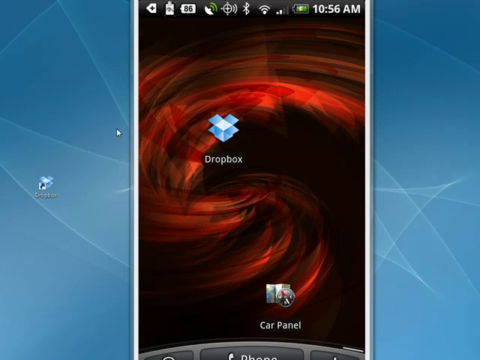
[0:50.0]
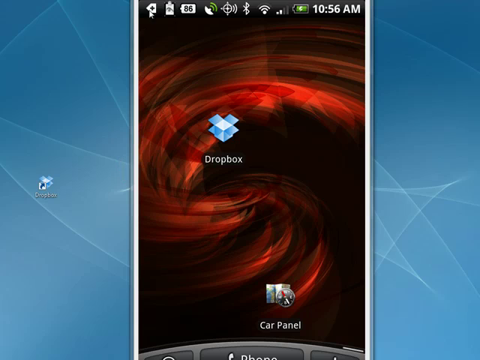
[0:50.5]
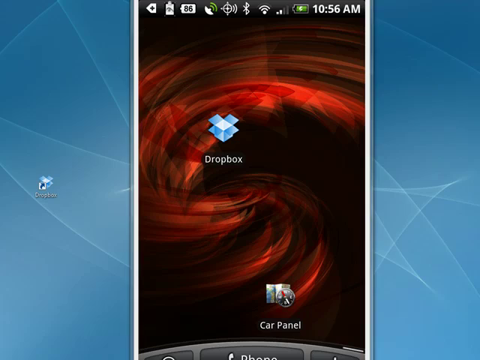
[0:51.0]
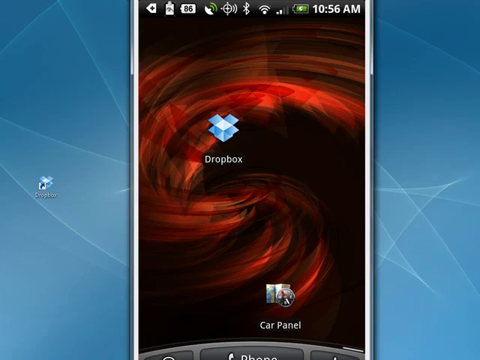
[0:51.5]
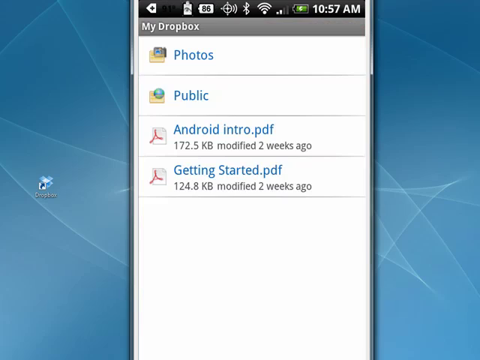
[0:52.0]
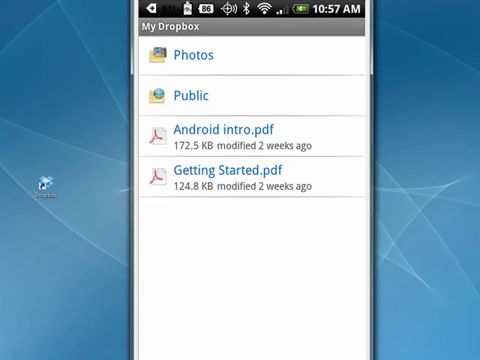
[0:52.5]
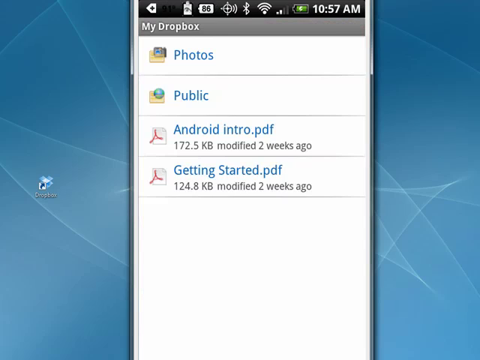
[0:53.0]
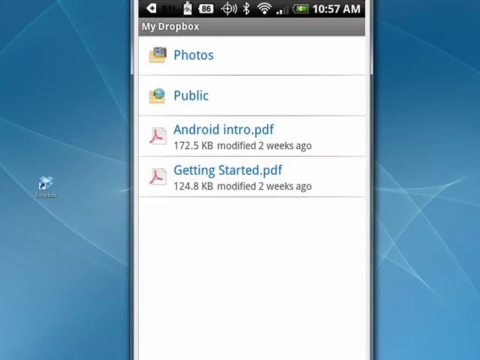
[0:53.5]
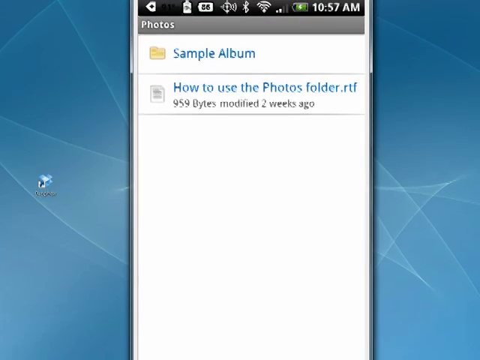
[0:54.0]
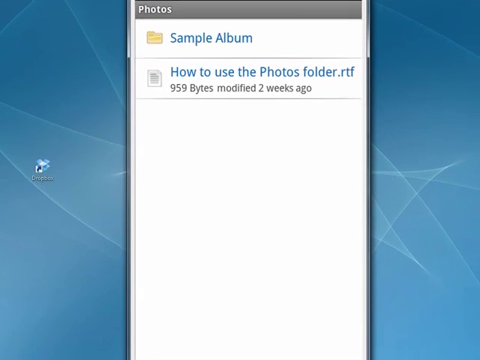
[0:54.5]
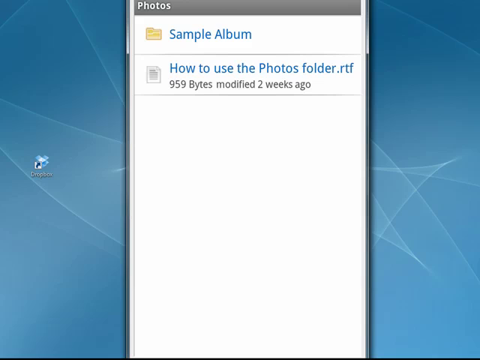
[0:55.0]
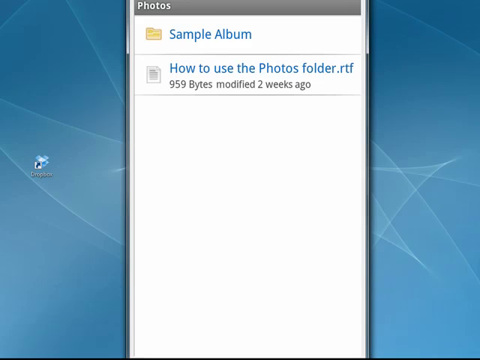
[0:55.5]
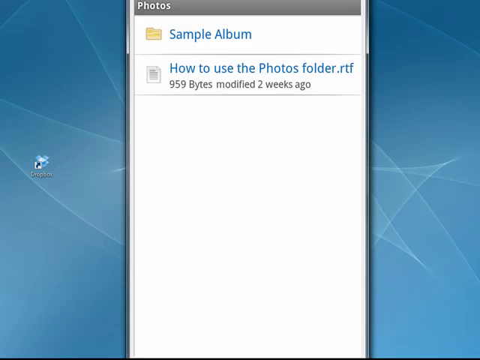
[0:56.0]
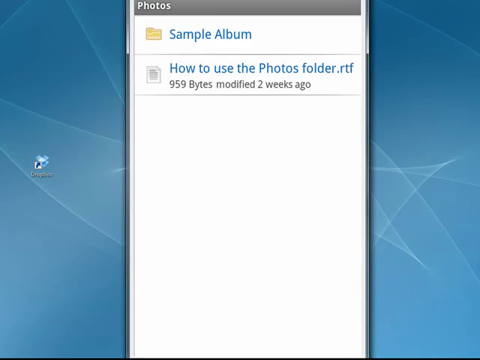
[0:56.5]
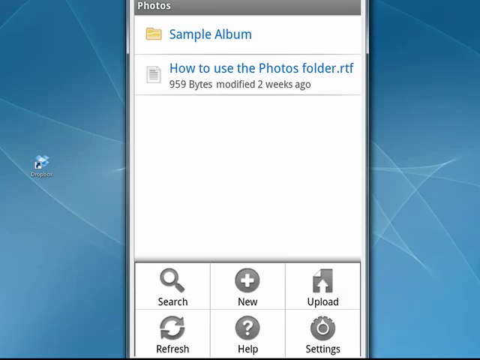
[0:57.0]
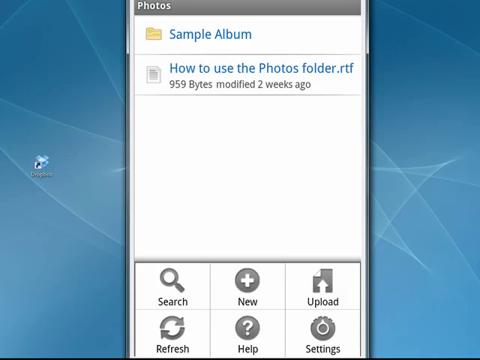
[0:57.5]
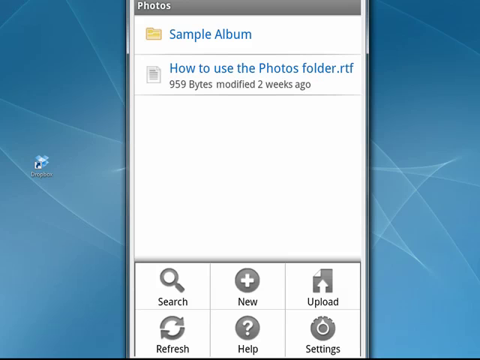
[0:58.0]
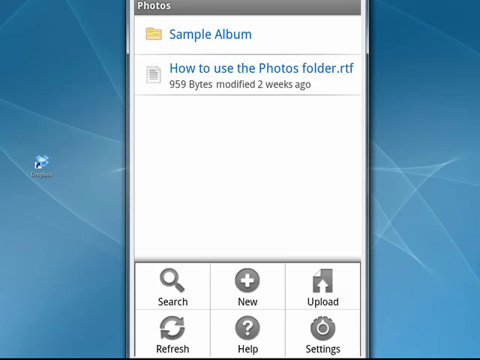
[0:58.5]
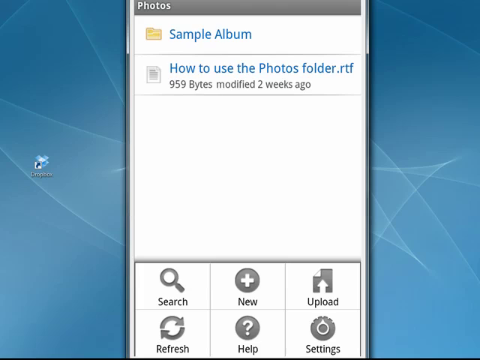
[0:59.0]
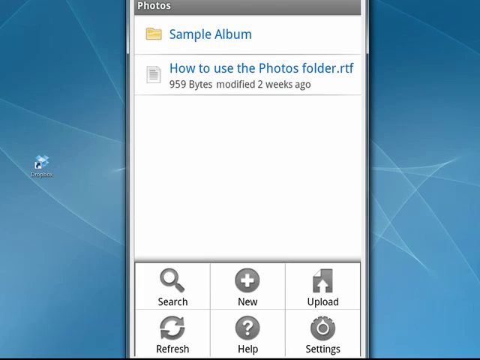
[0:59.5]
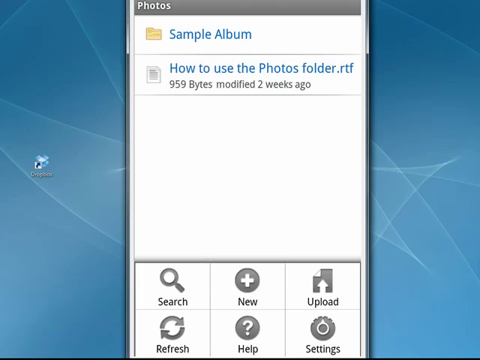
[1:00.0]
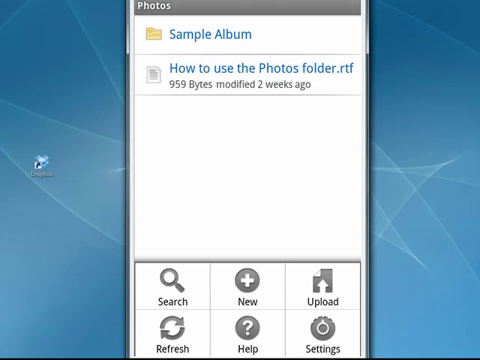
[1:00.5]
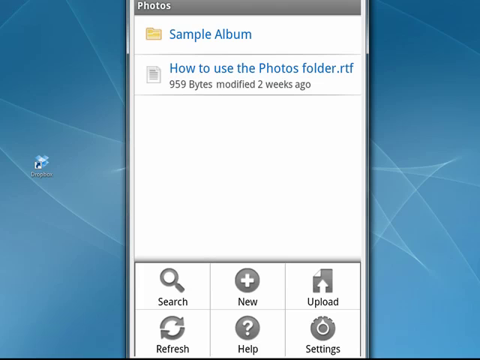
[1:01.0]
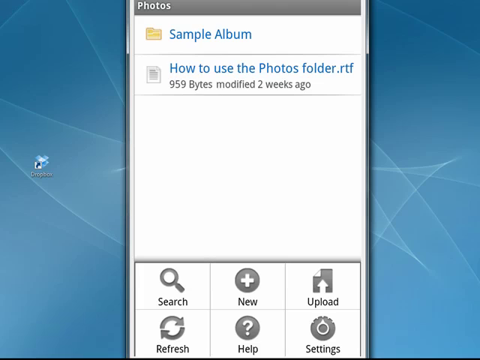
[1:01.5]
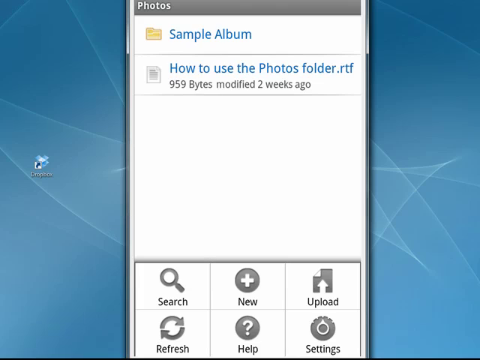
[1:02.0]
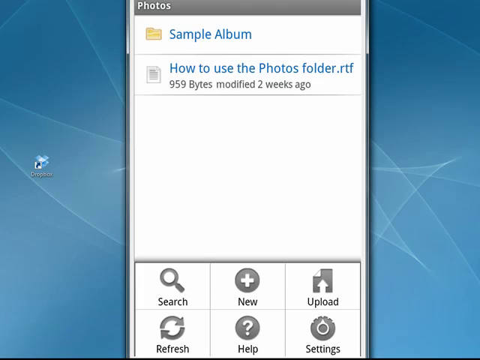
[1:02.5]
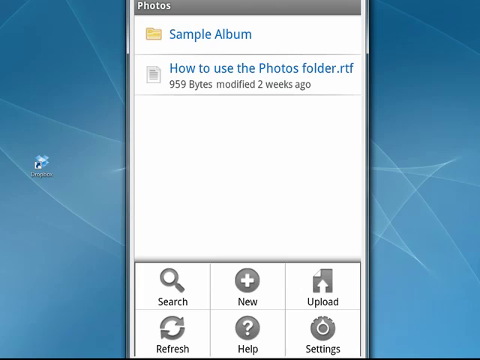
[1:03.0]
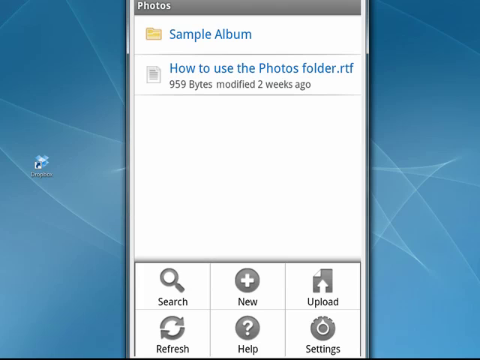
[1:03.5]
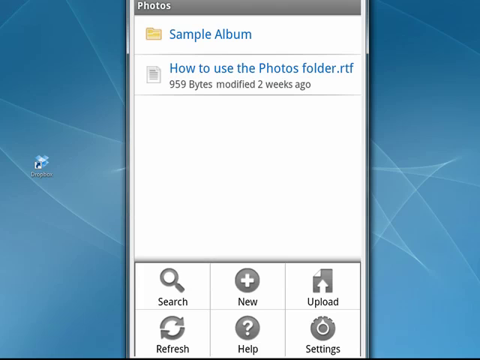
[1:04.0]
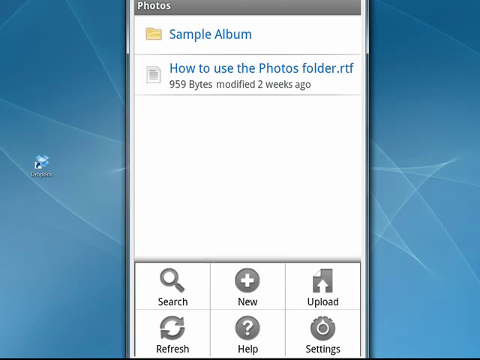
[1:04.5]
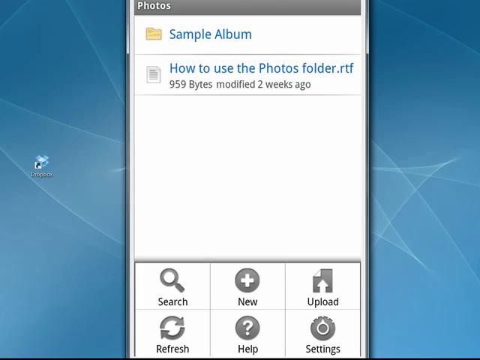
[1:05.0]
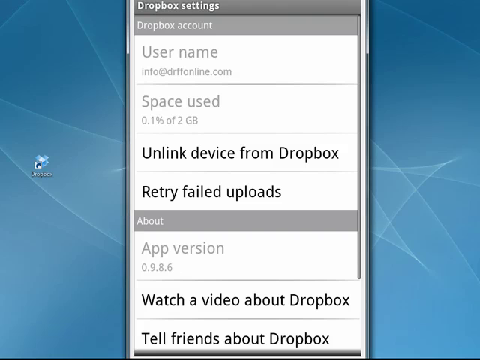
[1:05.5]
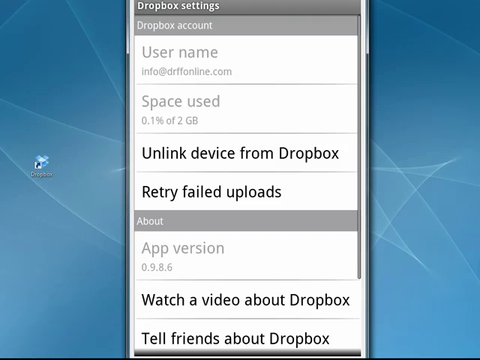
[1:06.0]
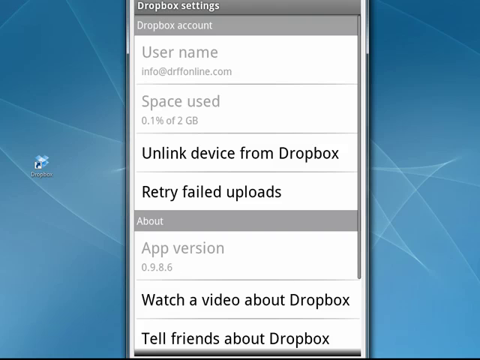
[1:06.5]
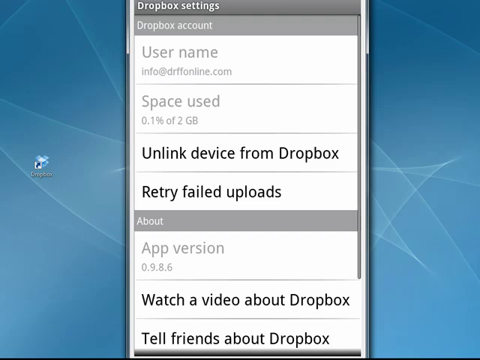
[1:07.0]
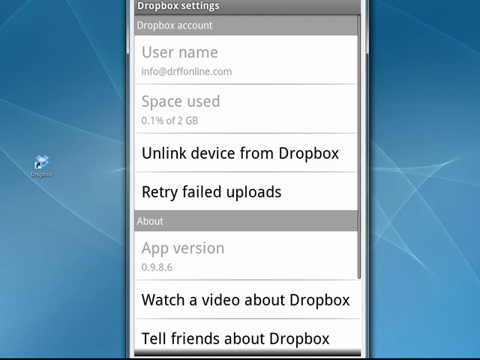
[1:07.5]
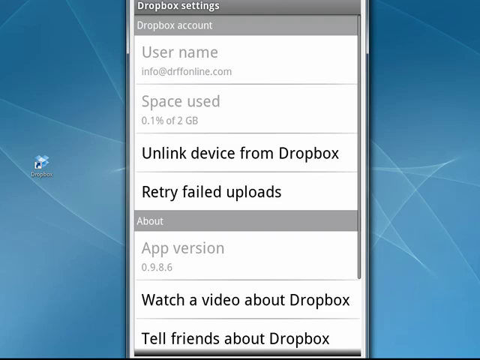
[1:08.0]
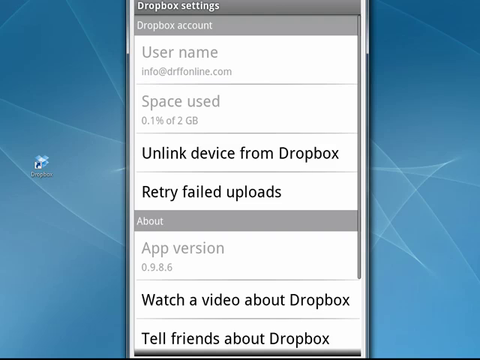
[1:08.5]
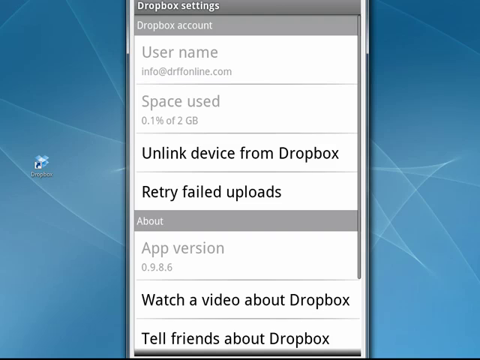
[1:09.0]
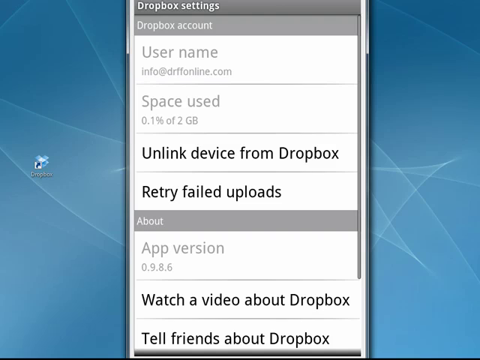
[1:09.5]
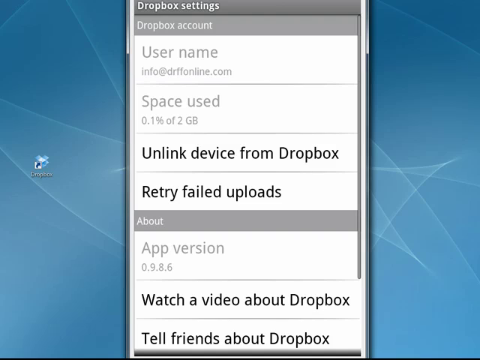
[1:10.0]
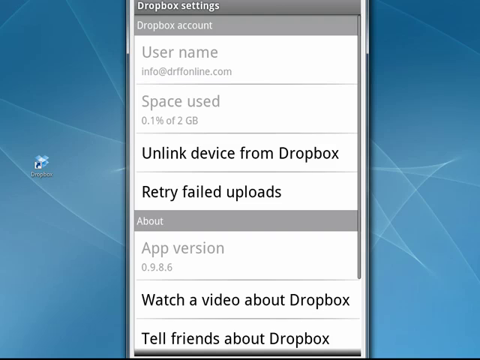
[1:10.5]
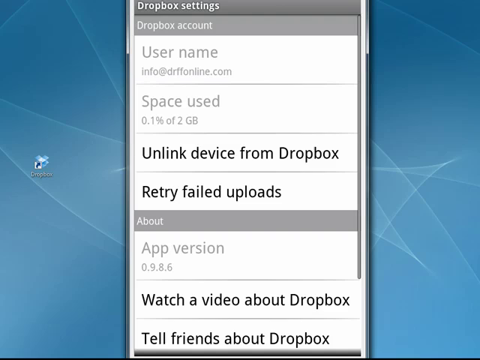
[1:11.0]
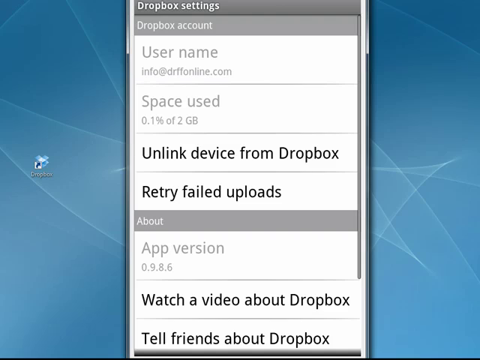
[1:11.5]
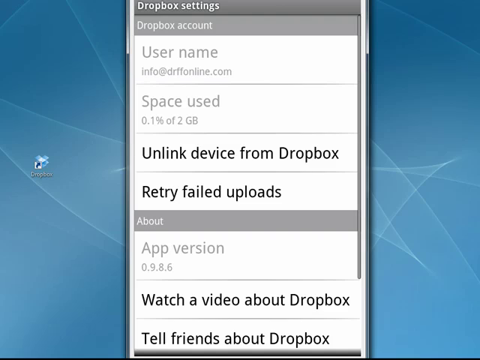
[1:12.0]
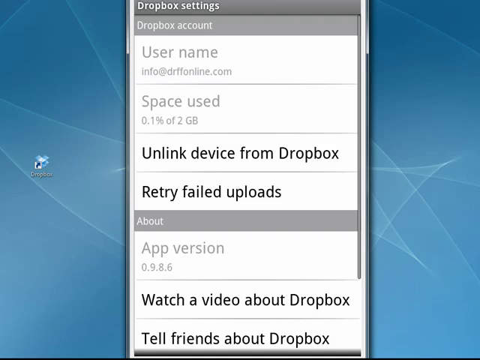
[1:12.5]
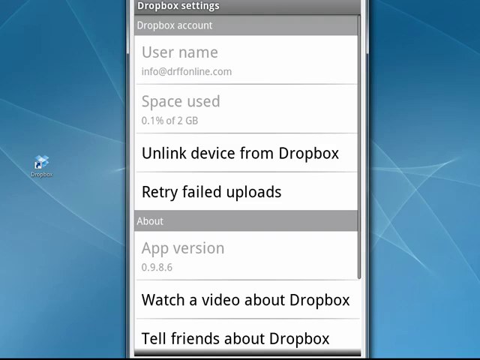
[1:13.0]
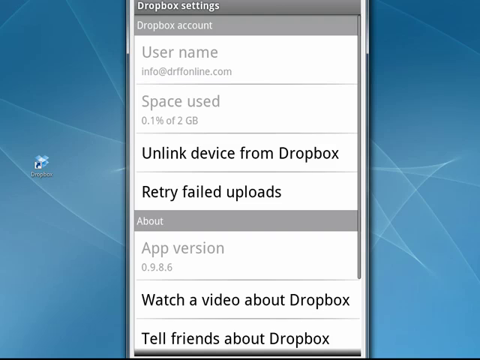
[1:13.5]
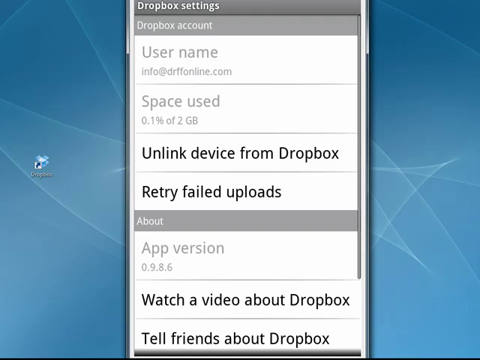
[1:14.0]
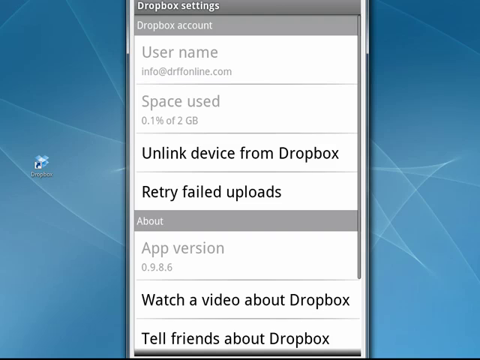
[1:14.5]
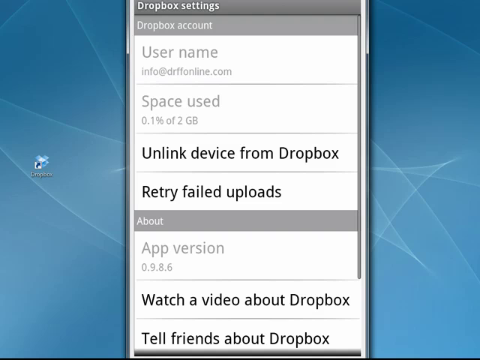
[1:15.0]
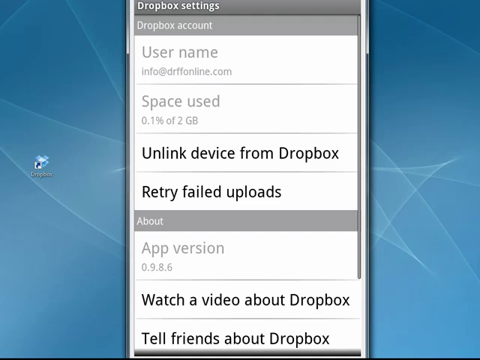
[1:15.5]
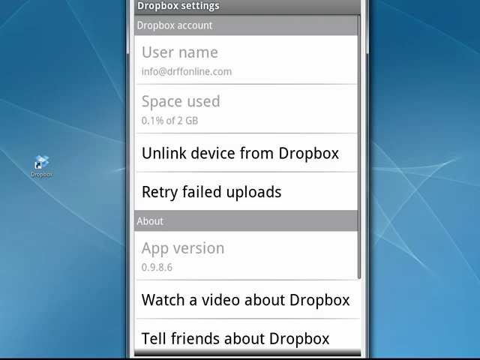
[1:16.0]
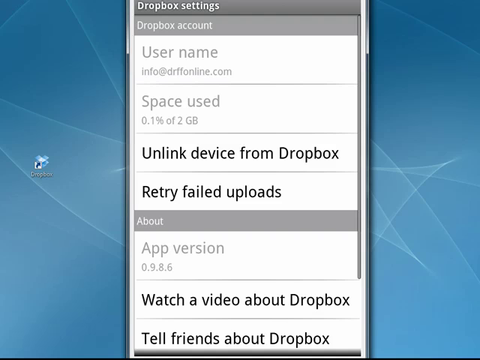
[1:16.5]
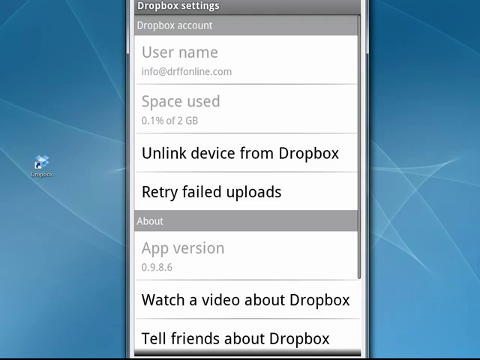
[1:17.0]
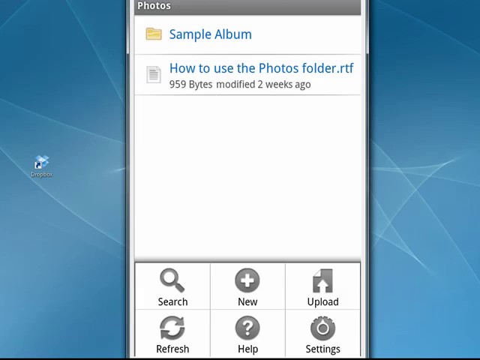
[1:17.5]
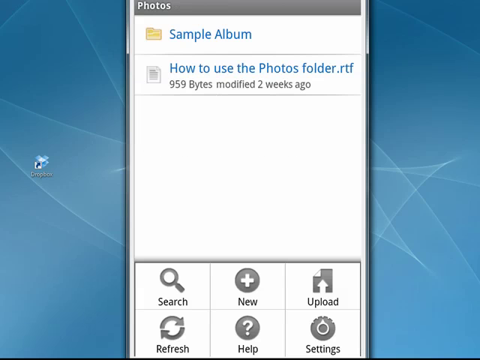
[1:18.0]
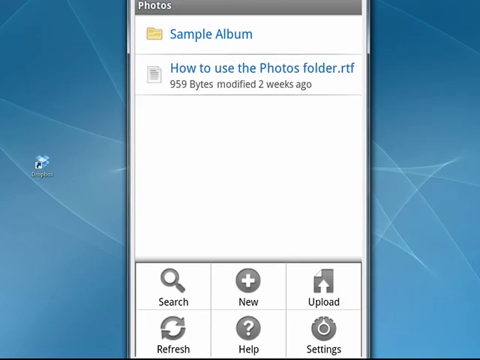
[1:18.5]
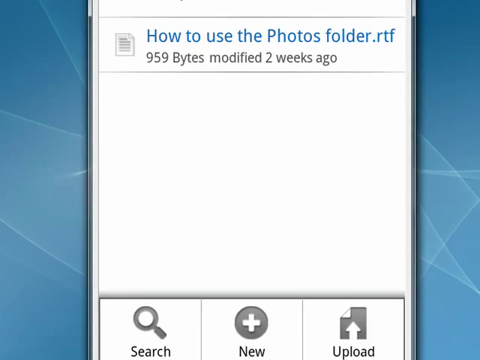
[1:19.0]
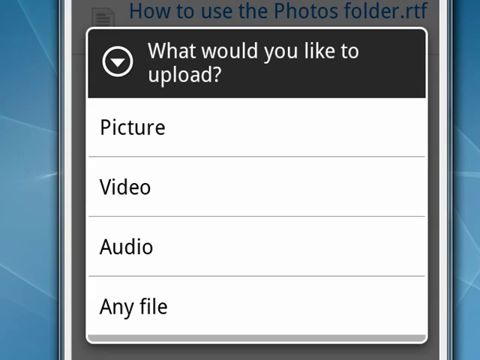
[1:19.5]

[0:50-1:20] On the phone screen the Dropbox icon is sort of 3D: a square whose four tops look open, as if something could be put inside, with "Dropbox" in white at the bottom. On the computer screen the icon looks similar, but there seems to be another square with an arrow in it on top. The phone screen then changes to a menu that says "My Dropbox" with the options "Photos", "Public", "Android Intro.pdf" and "Getting Started.pdf"; under Photos it says "Sample Album" and "How to Use the Folders for Photos.rtf". A pop-up appears with gray options that have pictures: "Search", "New", "Upload", "Refresh", "Help" and "Settings". Then the Dropbox settings open, showing the person's username and the space they have used, along with "Unlink Device from Dropbox", "Retry Failed Uploads", "About App Version", "Watch a Video About Dropbox" and "Tell Friends About Dropbox".